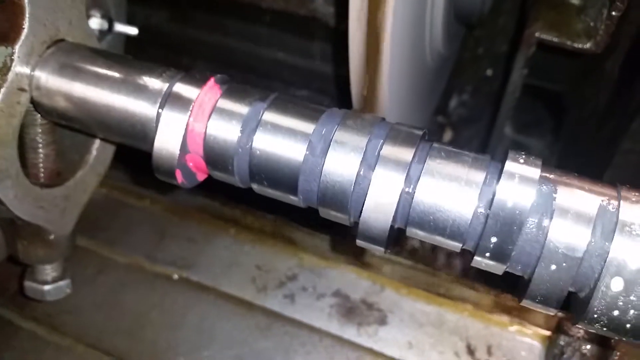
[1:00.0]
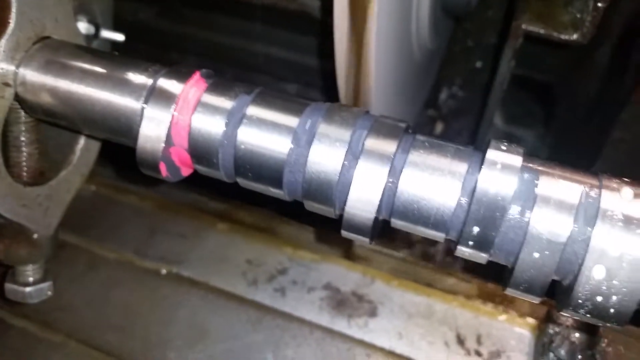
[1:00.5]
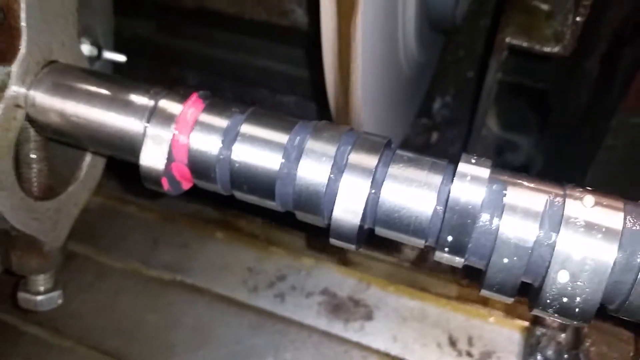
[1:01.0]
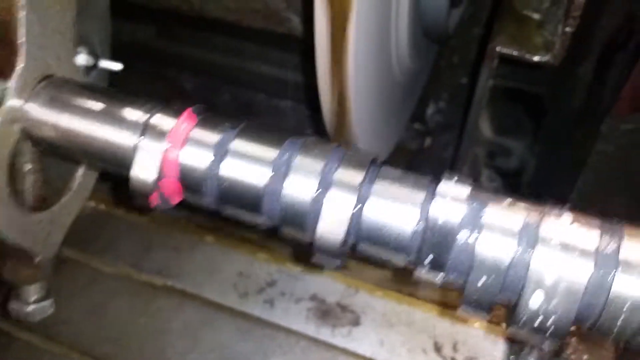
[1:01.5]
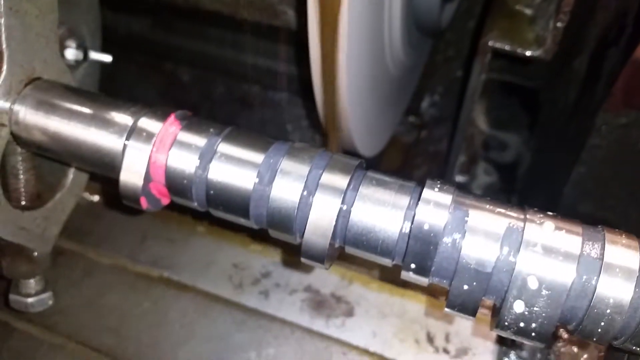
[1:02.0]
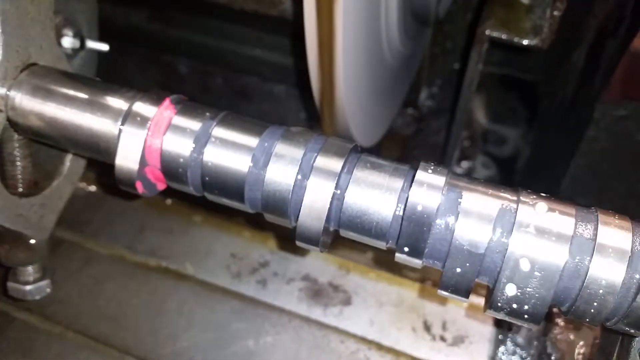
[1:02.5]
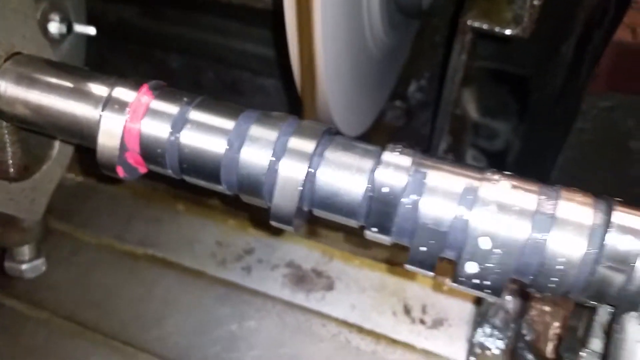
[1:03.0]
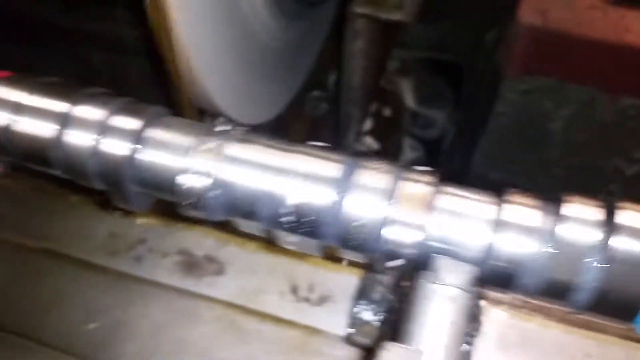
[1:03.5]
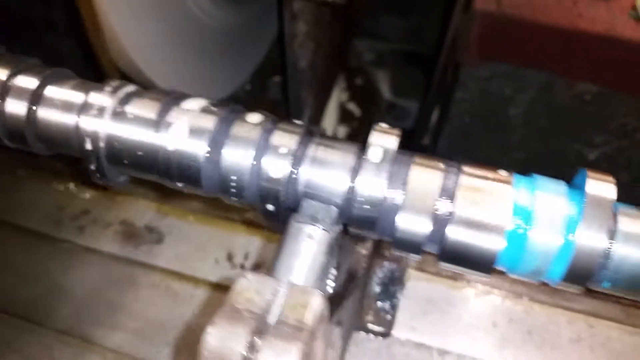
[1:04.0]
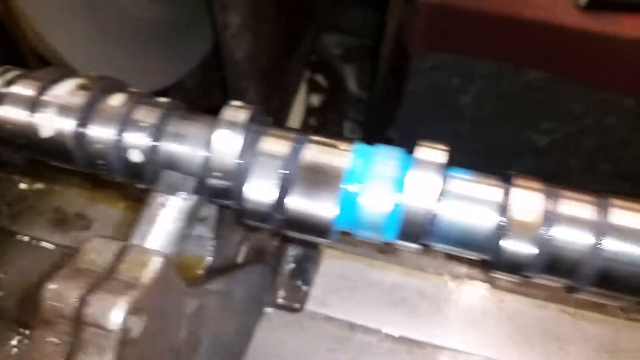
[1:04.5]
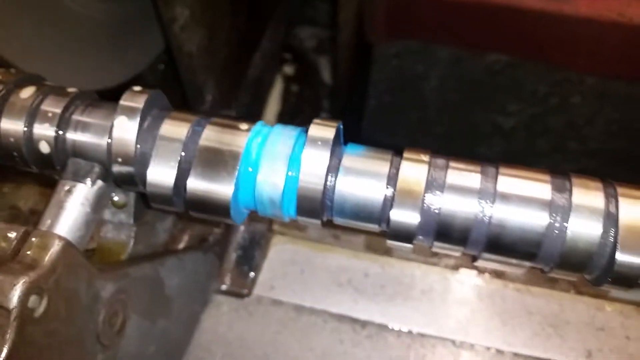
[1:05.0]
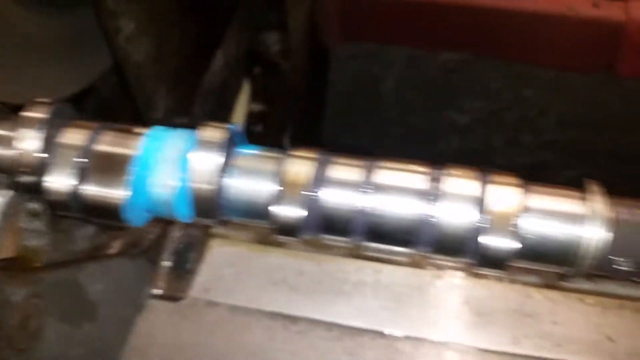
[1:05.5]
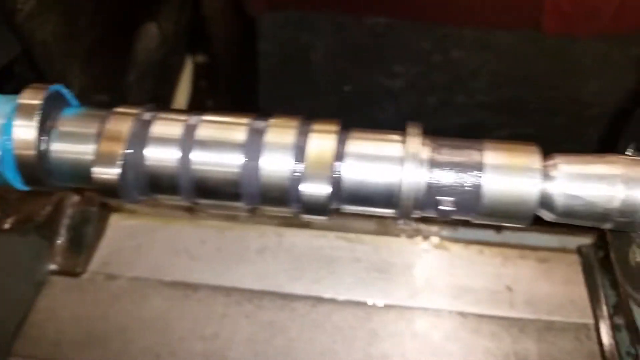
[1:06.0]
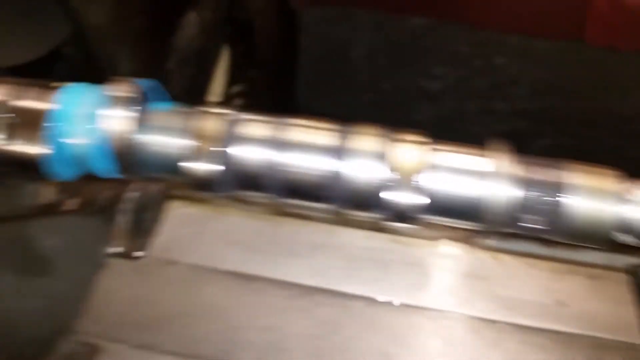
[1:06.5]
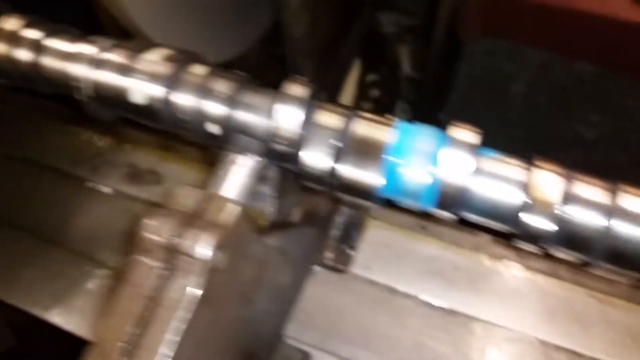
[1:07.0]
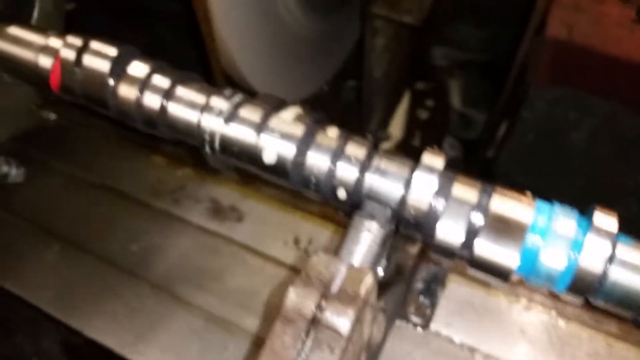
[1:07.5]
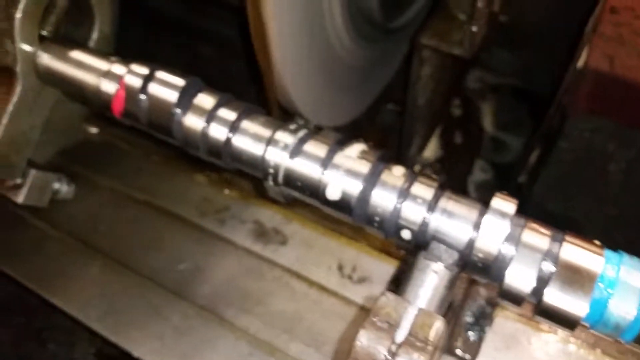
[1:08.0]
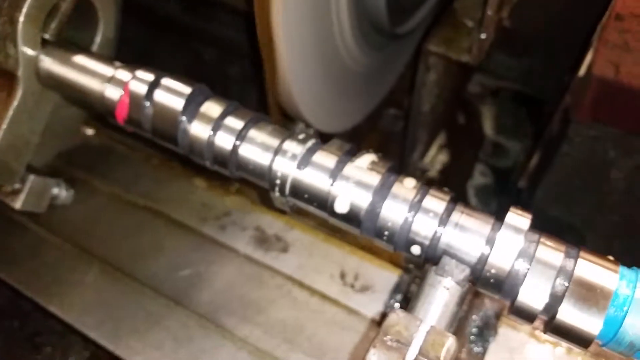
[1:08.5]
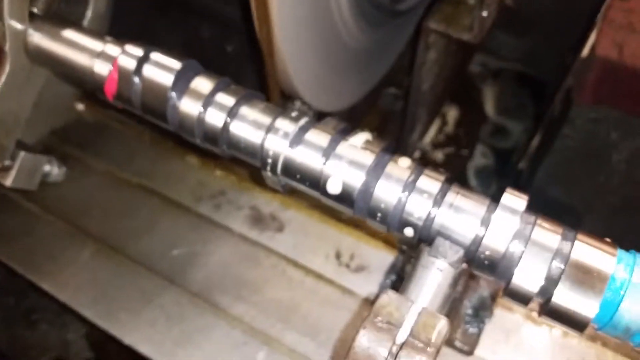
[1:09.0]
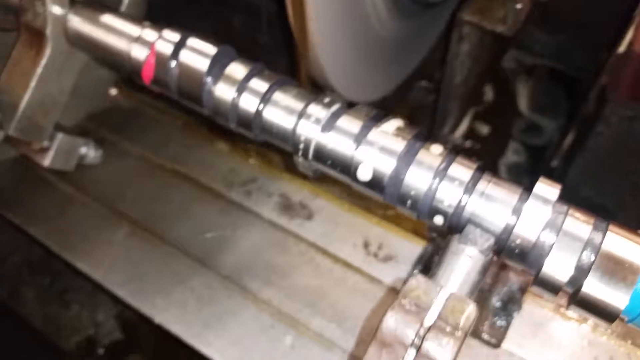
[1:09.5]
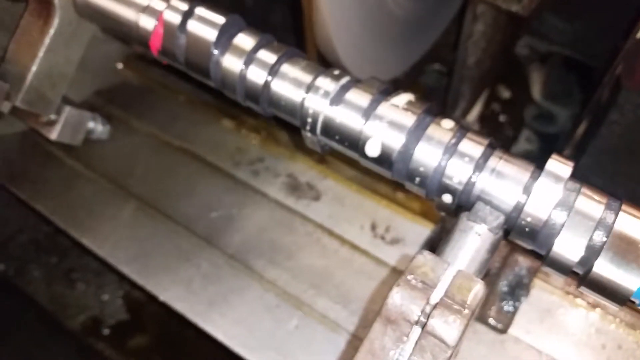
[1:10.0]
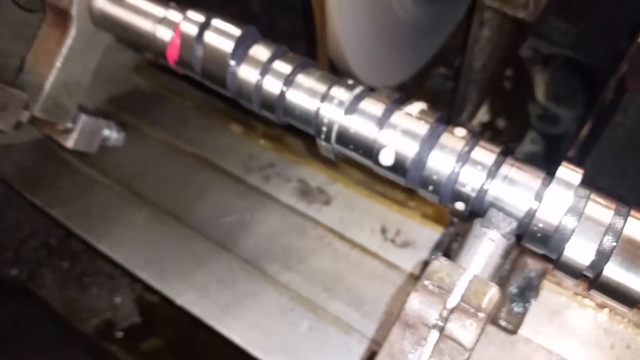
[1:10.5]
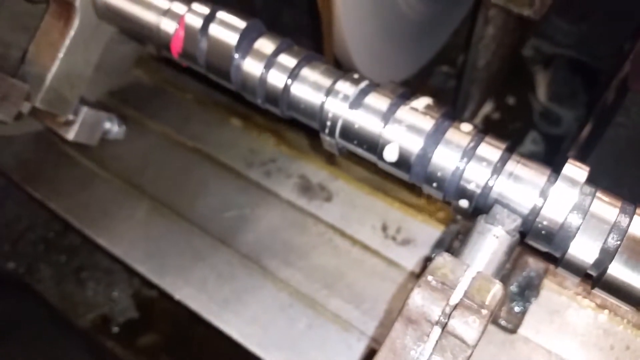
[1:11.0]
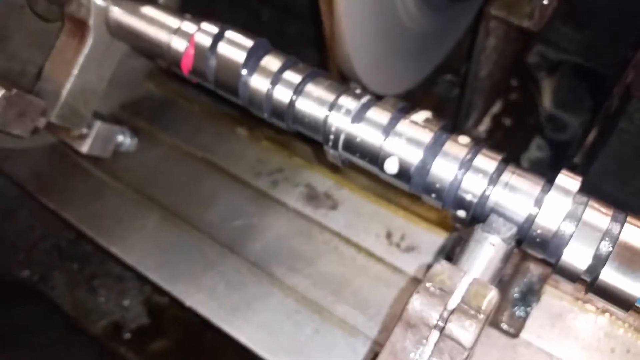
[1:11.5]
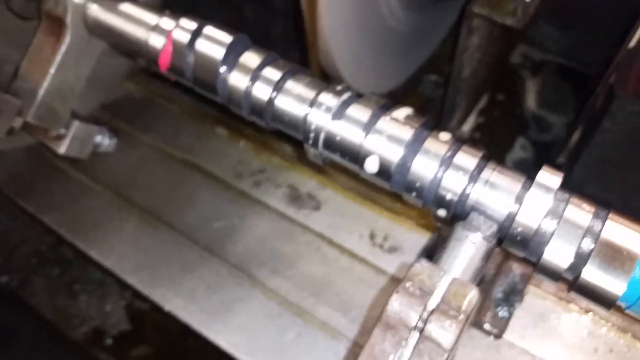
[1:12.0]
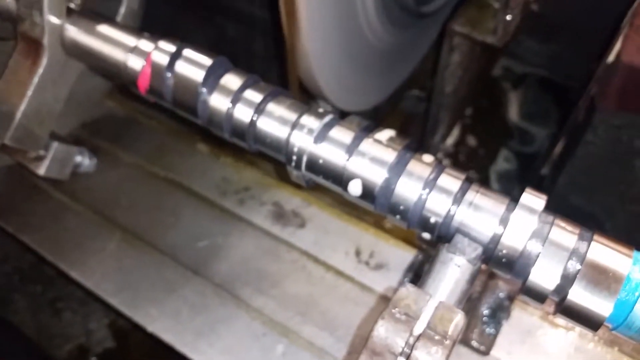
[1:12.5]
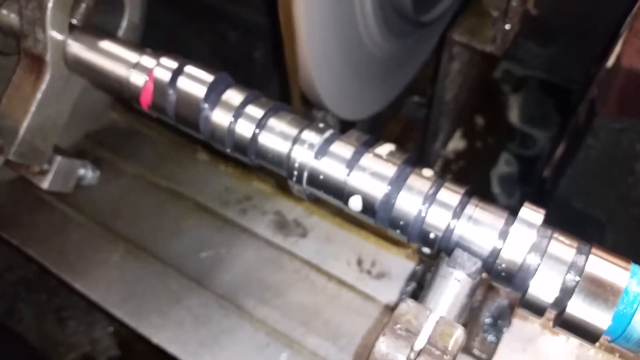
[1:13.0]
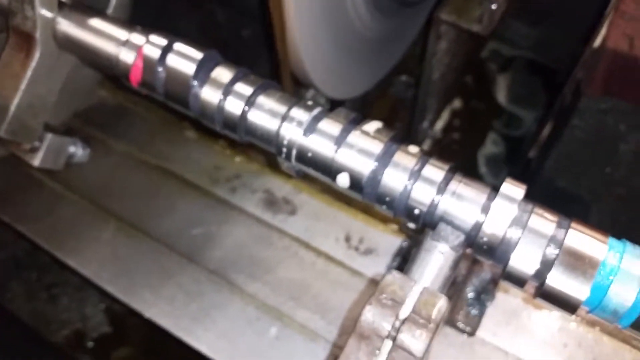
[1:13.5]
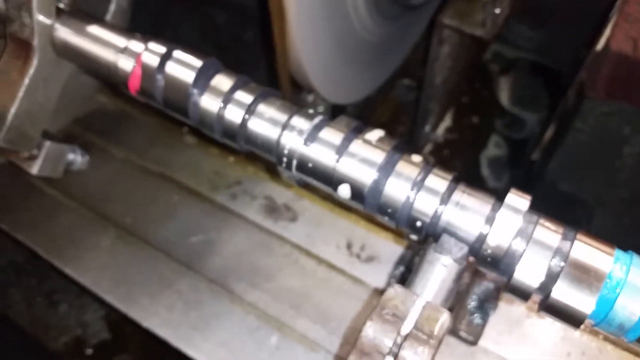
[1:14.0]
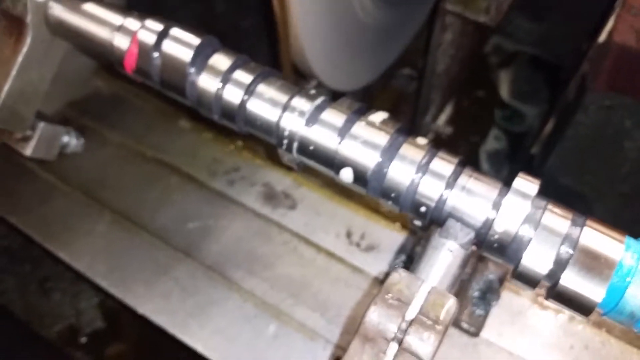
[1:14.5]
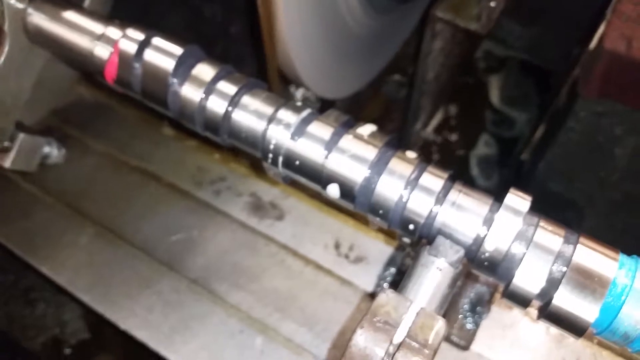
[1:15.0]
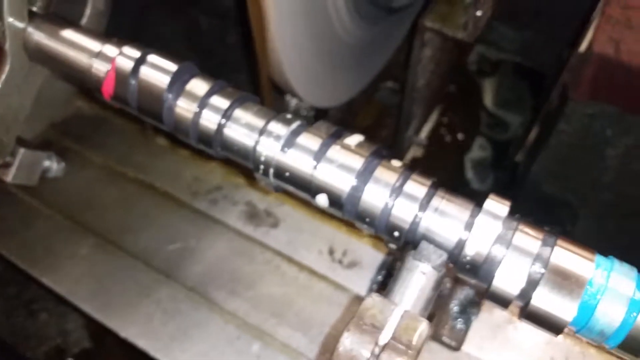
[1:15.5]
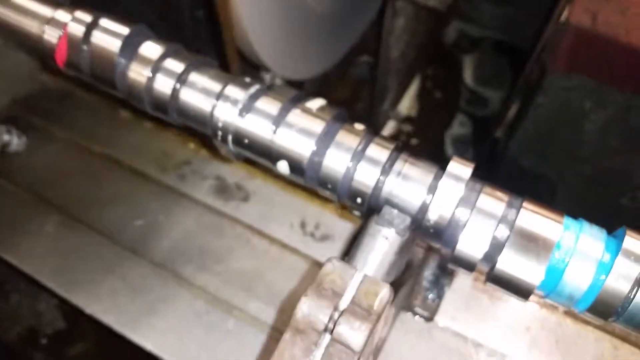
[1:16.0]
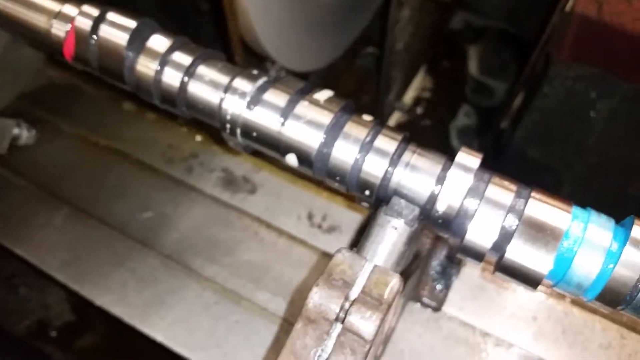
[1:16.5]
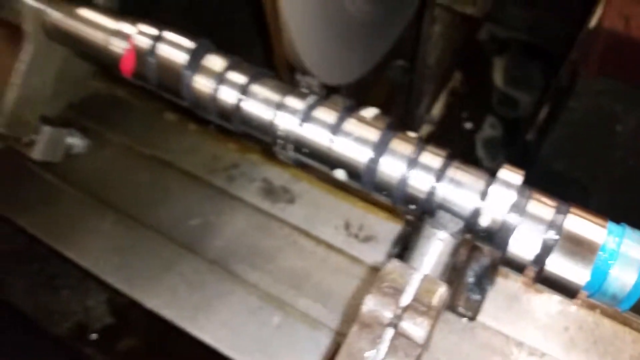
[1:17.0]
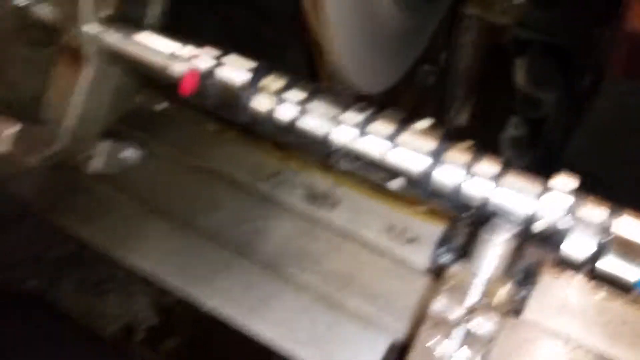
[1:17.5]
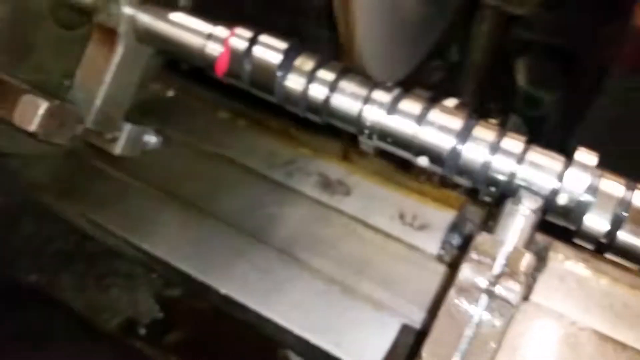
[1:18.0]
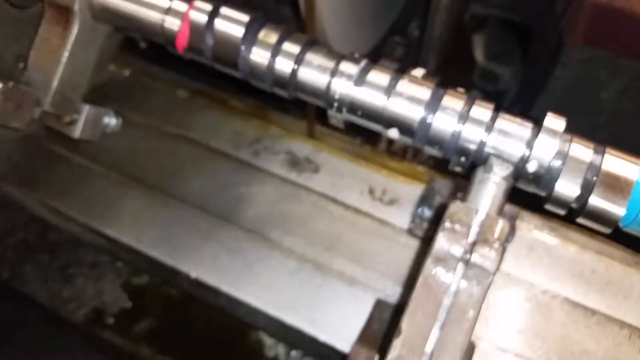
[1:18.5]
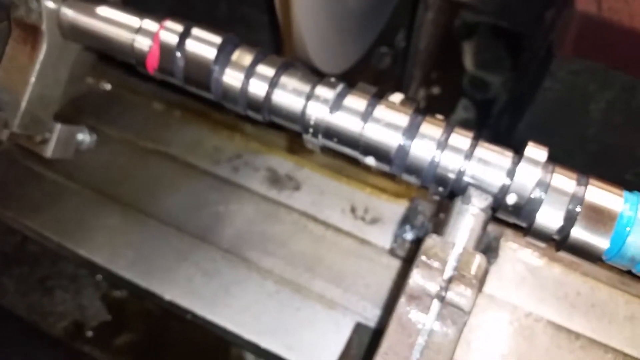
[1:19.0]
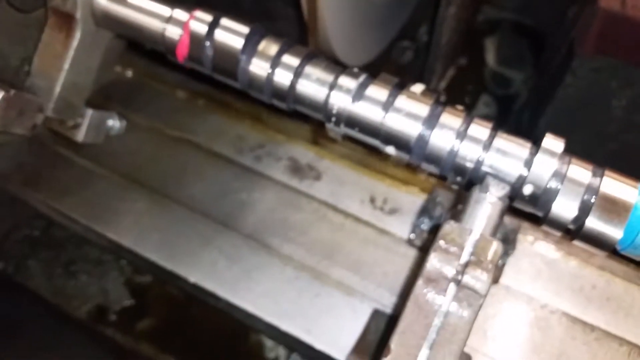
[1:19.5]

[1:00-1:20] The machine, which was very dirty, appears to be undergoing cleaning and servicing, and it moves. The area that was worked on now looks clean and good, while a lot of work remains to be done down below.